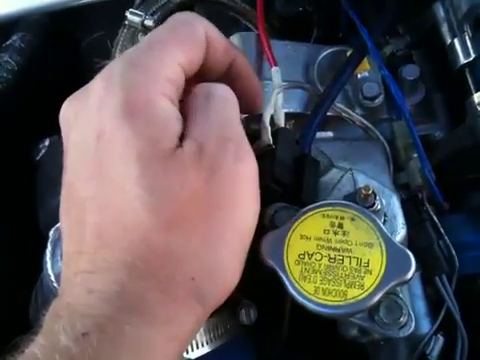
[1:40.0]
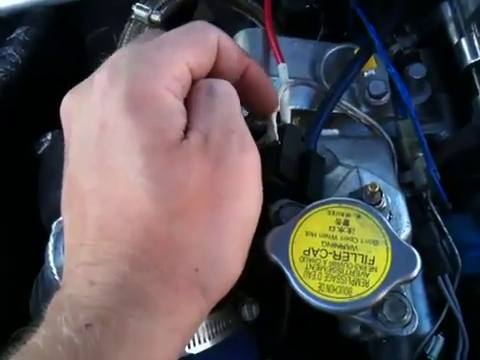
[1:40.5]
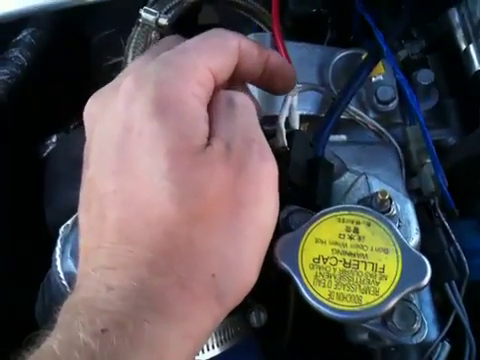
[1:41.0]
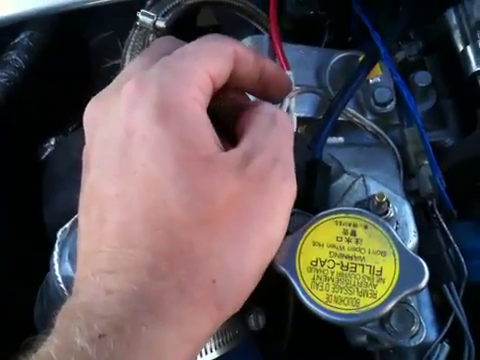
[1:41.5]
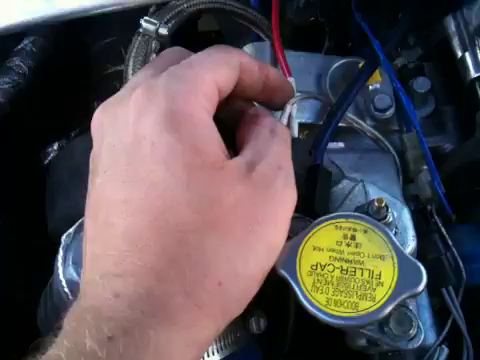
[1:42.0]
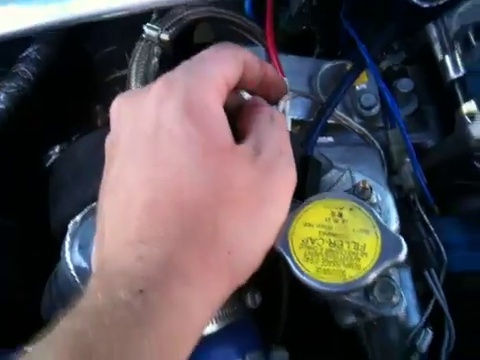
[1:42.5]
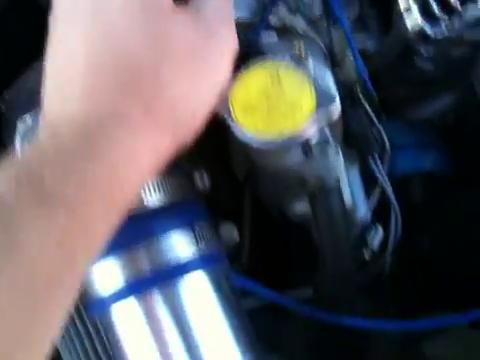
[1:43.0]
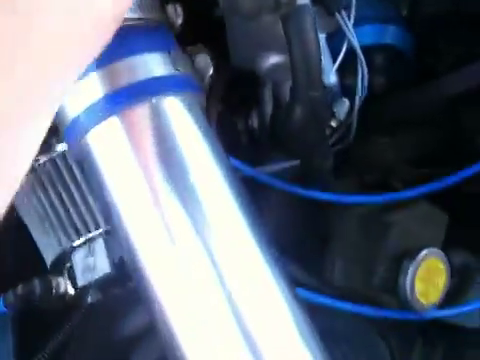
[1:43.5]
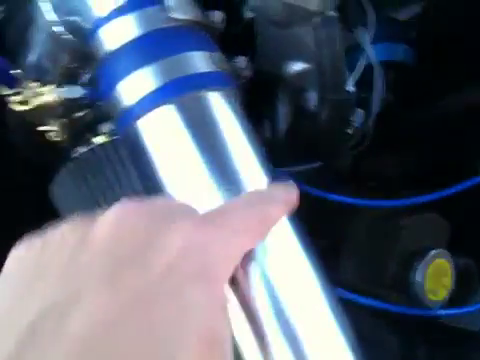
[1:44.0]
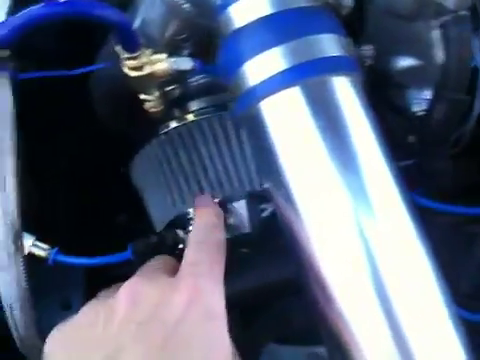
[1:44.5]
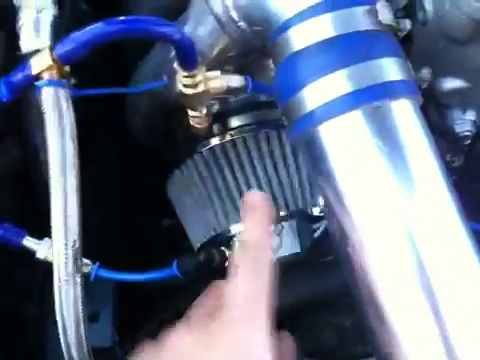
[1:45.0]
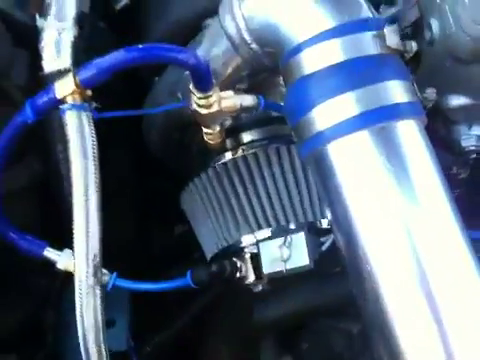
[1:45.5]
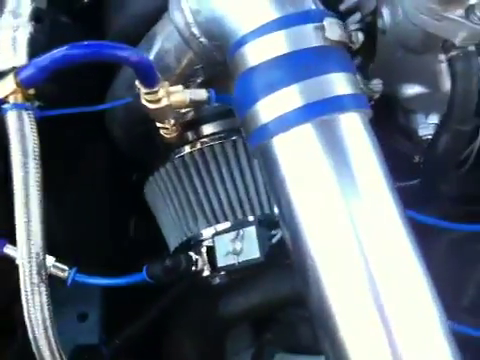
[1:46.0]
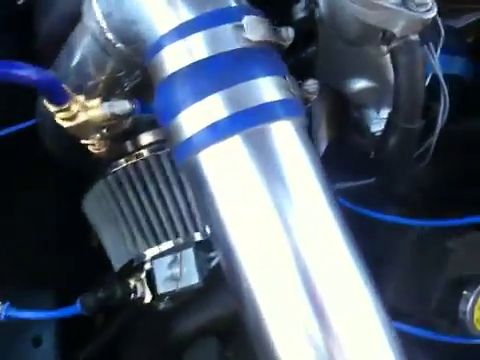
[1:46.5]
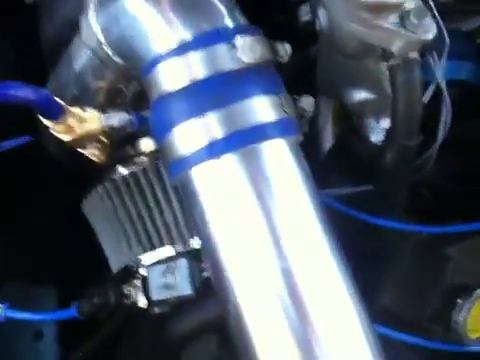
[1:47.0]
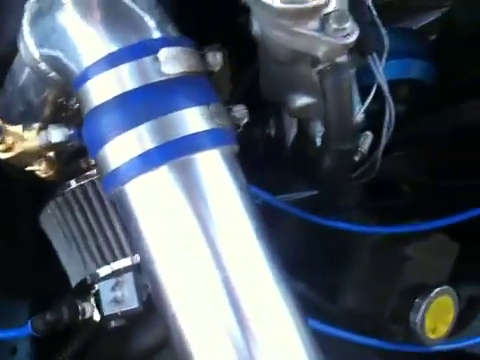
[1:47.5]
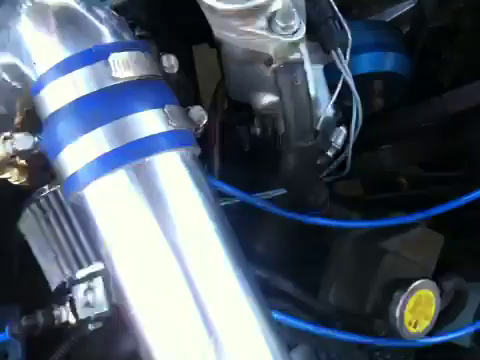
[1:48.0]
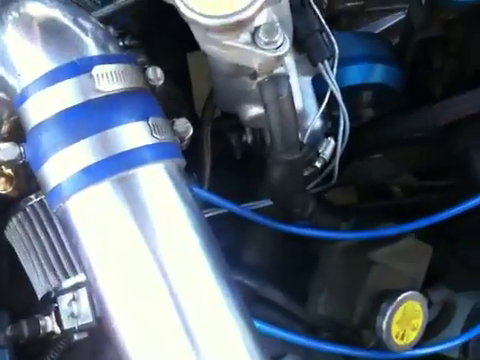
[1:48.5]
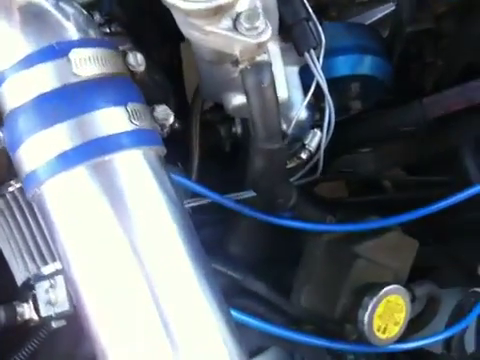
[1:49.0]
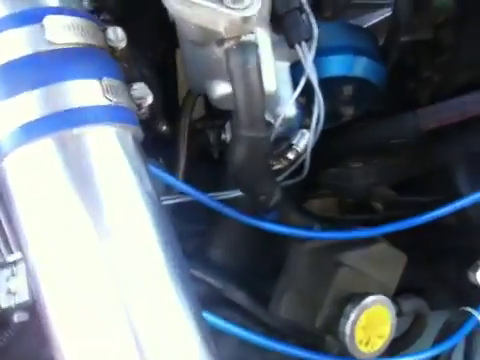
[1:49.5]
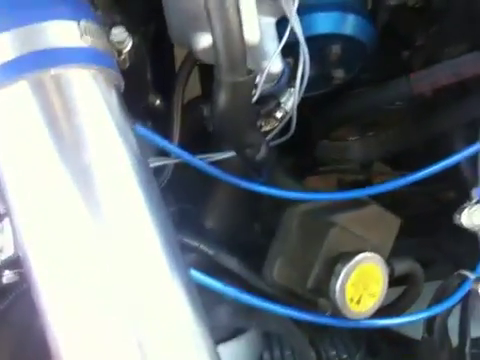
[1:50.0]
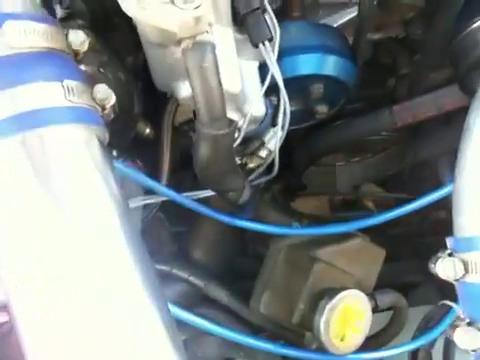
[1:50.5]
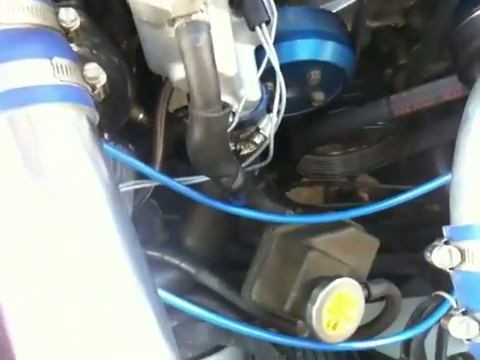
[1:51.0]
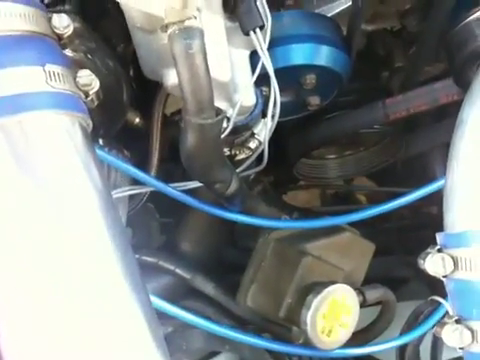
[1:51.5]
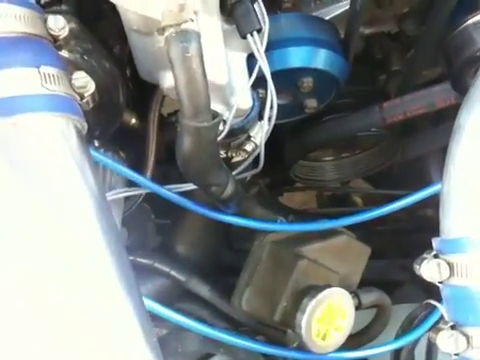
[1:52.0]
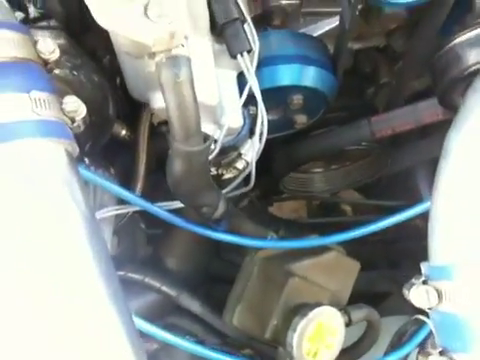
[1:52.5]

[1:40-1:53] The person's entire left hand is in view while they record with their right hand. The hand is near some type of valve on the hood with a yellow sticker that says "filler cap", along with many other words that are unreadable. The fingers are near blue and red wires connected to this cap and valve. The camera then moves down to a large, shiny silver pipe with blue stripes; to its left is some type of funnel below it that spins. The person looks at blue wires connected to this area that stretch across the hood, apparently analyzing what needs to be repaired.